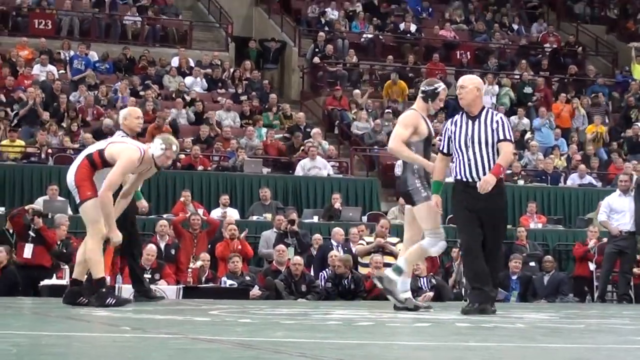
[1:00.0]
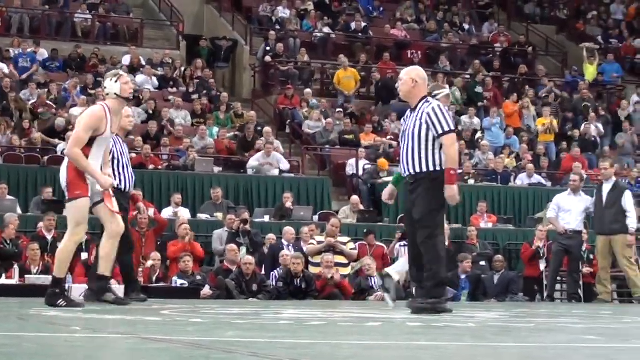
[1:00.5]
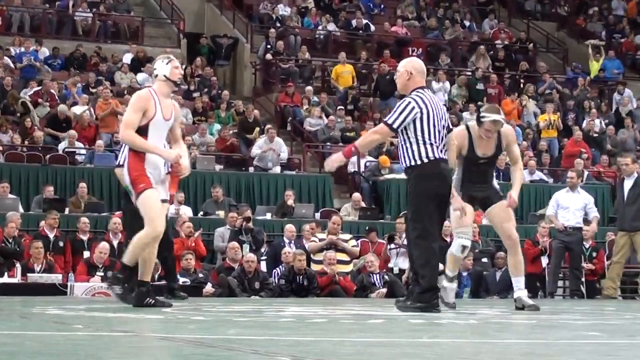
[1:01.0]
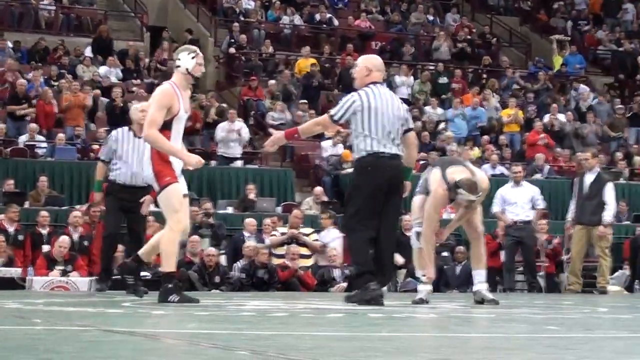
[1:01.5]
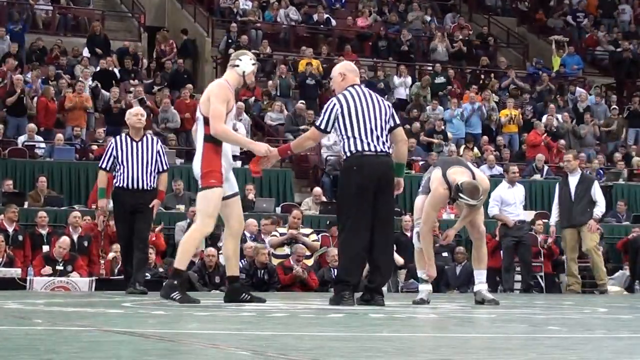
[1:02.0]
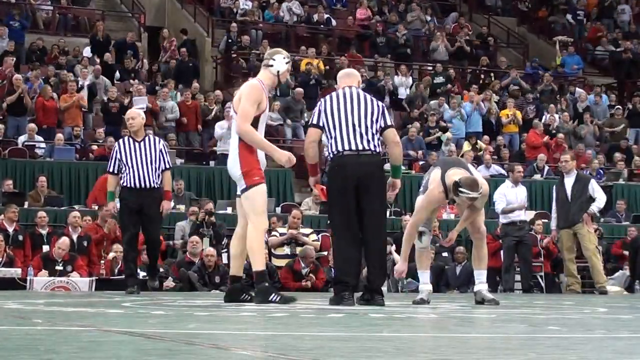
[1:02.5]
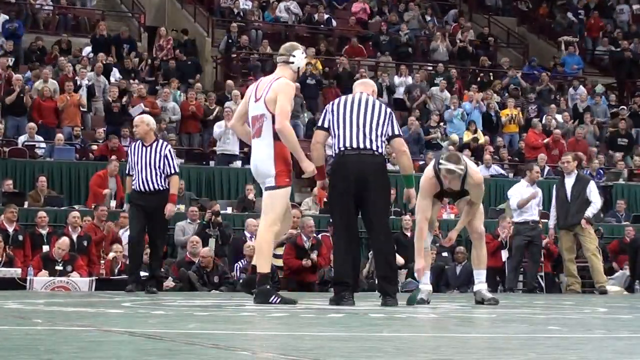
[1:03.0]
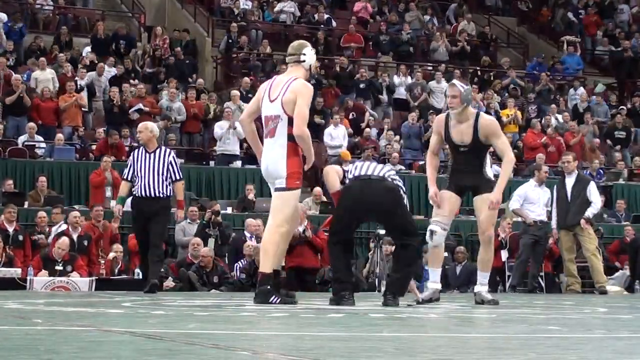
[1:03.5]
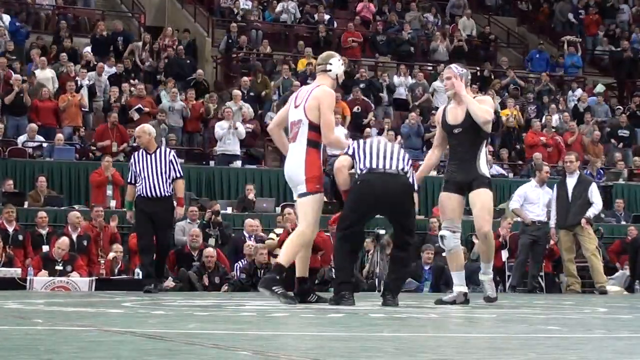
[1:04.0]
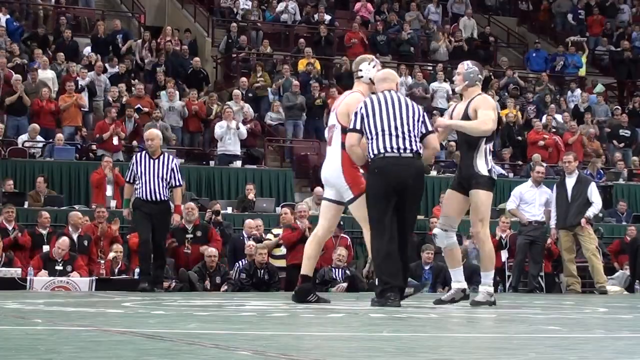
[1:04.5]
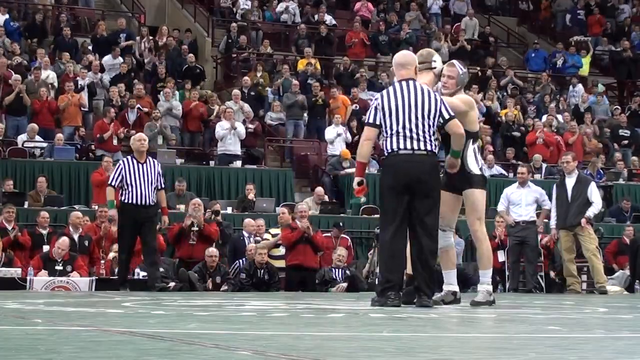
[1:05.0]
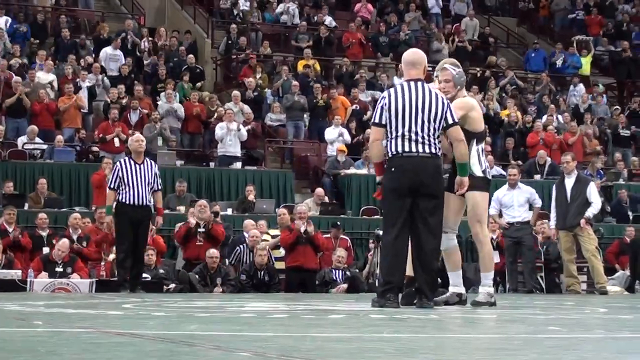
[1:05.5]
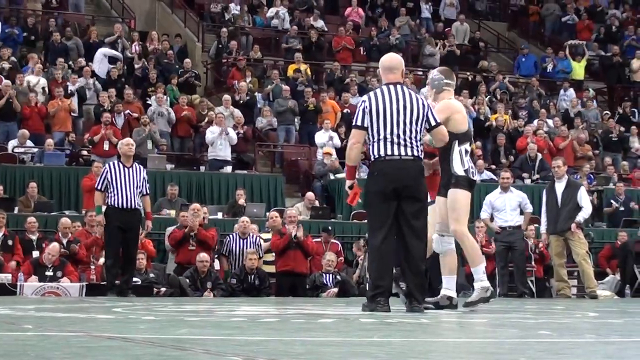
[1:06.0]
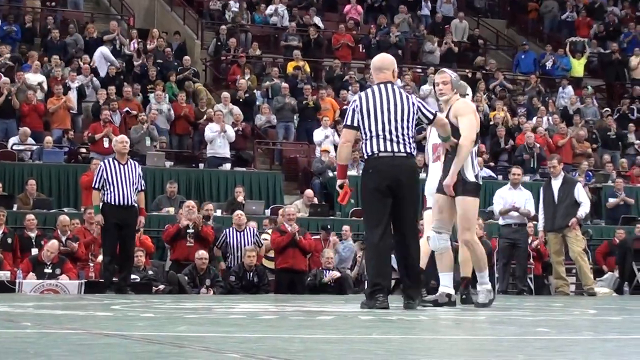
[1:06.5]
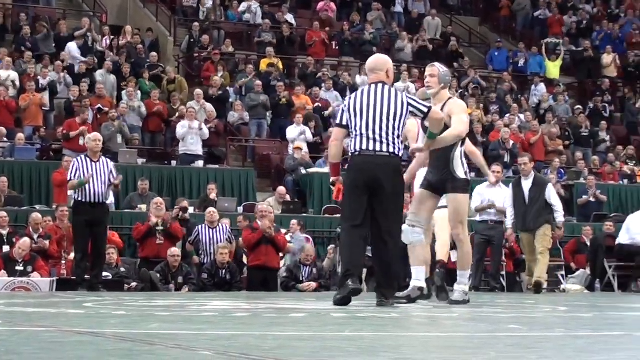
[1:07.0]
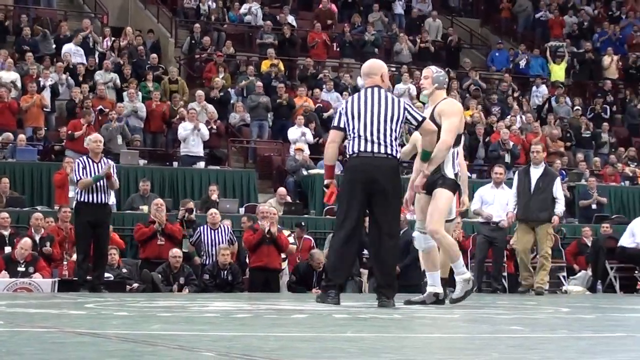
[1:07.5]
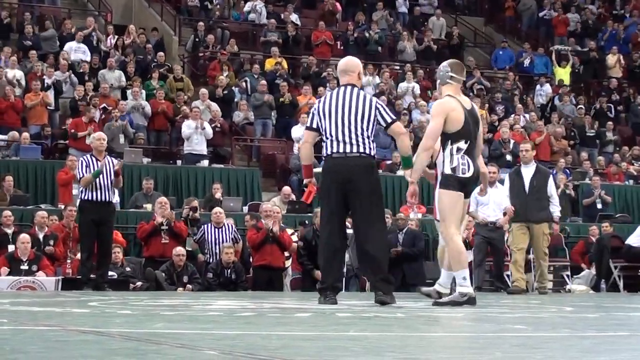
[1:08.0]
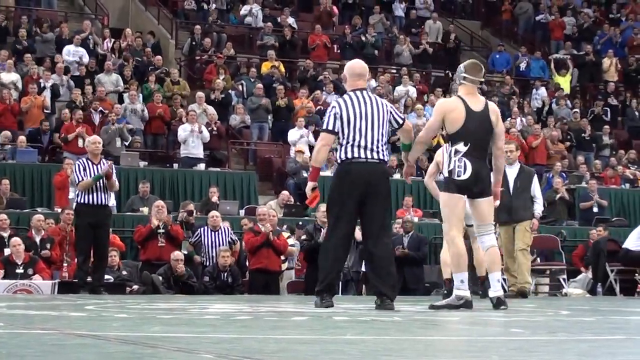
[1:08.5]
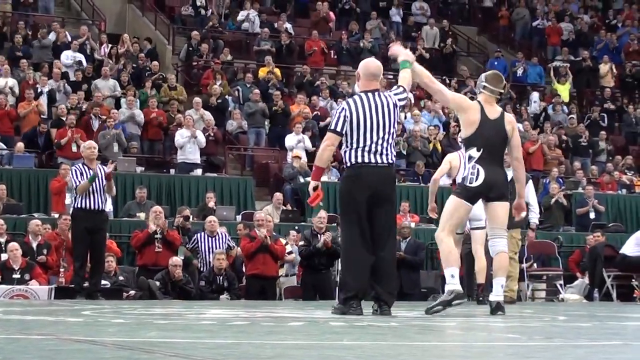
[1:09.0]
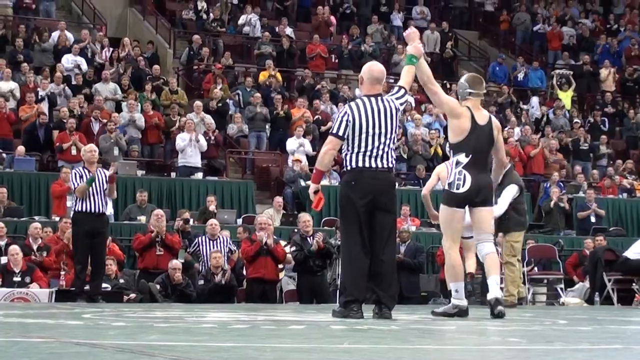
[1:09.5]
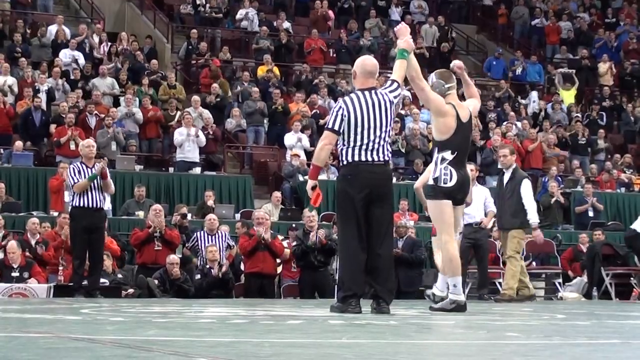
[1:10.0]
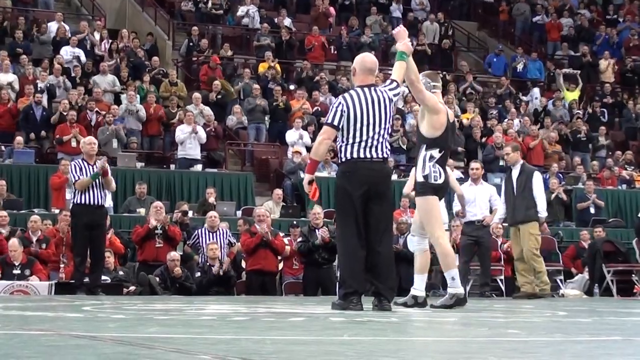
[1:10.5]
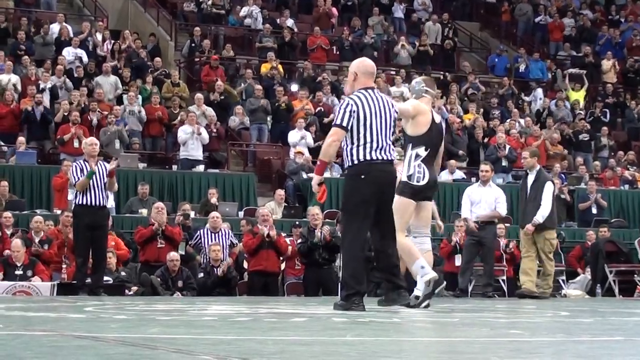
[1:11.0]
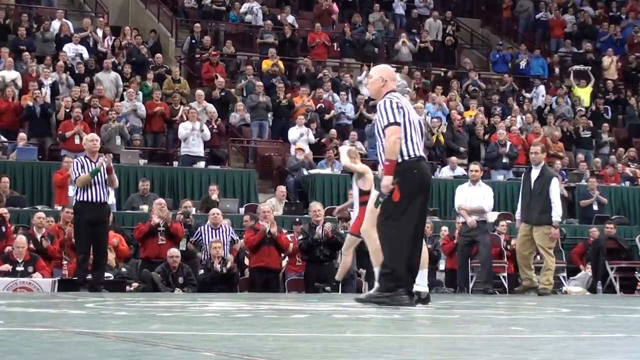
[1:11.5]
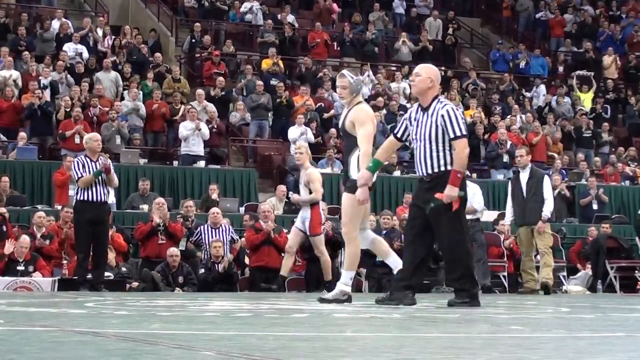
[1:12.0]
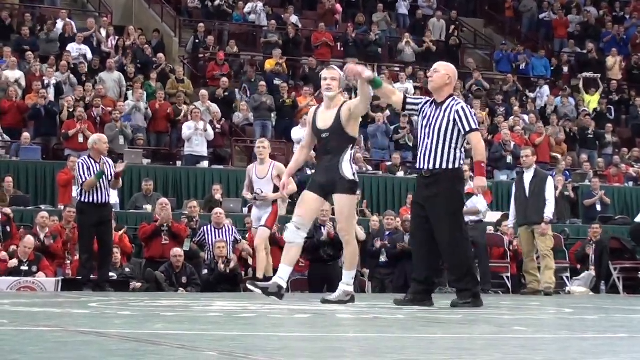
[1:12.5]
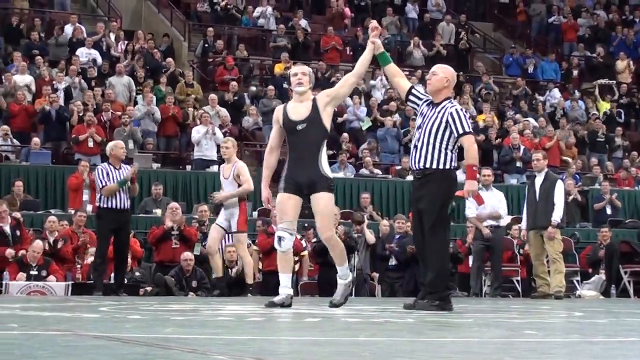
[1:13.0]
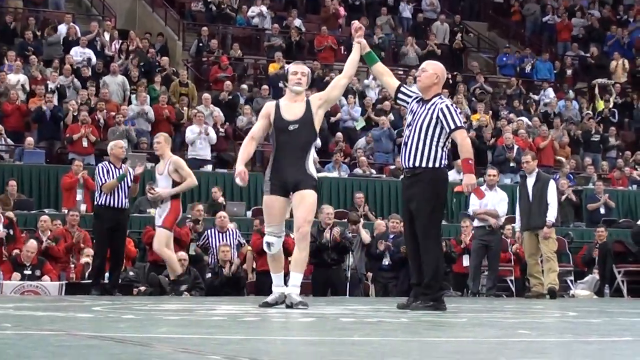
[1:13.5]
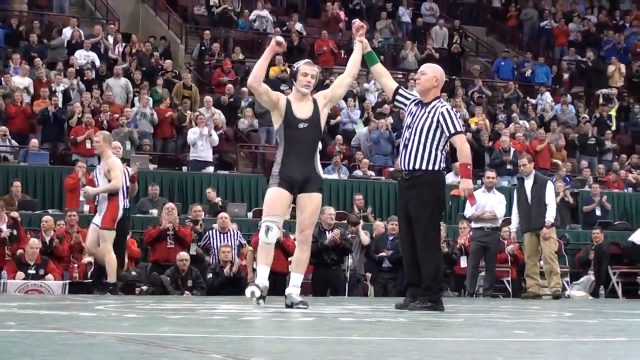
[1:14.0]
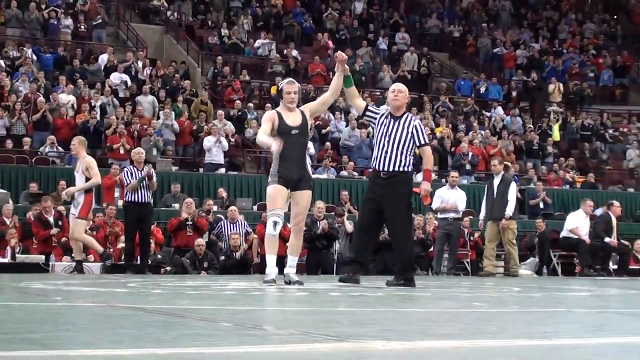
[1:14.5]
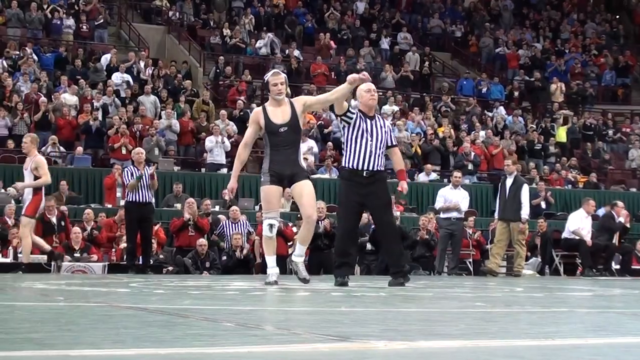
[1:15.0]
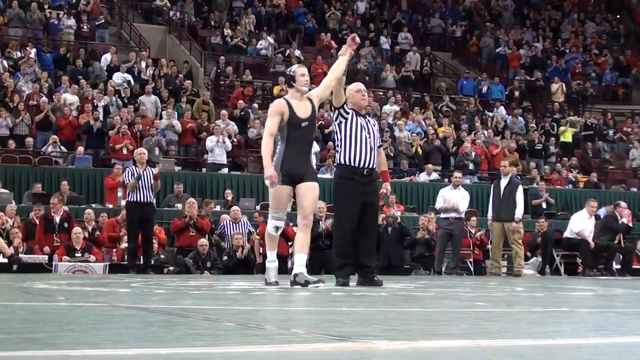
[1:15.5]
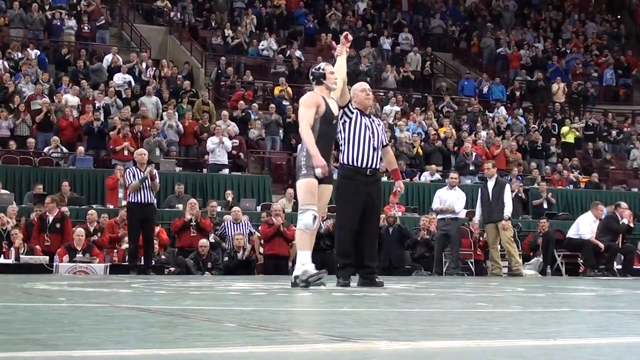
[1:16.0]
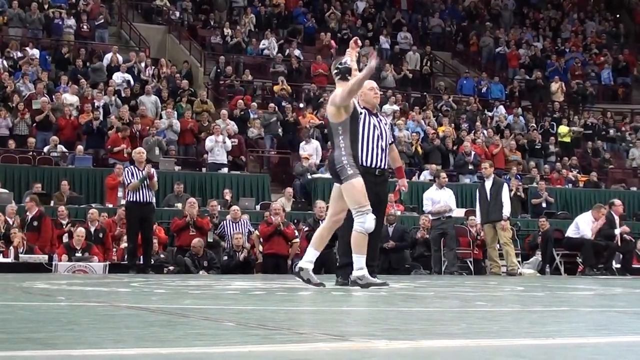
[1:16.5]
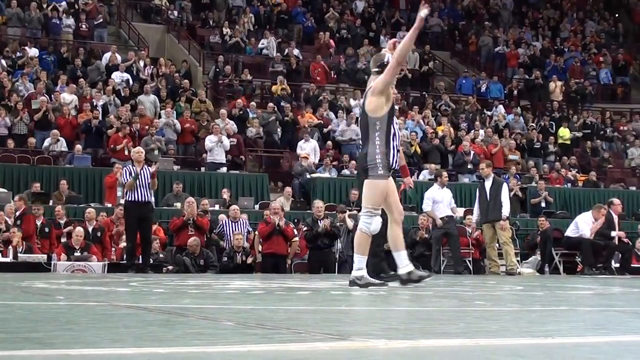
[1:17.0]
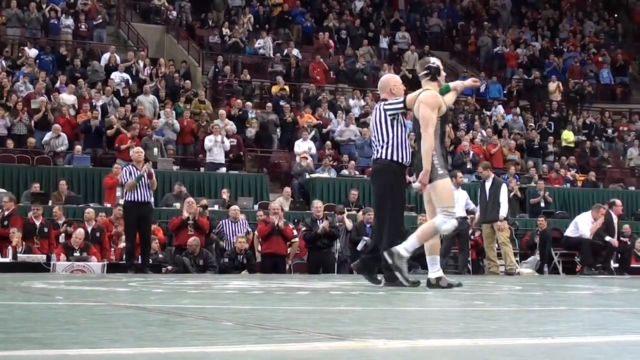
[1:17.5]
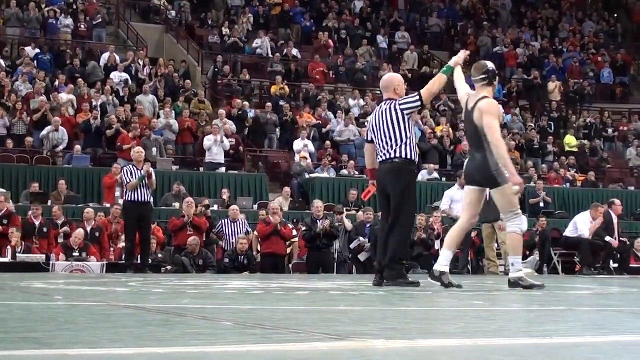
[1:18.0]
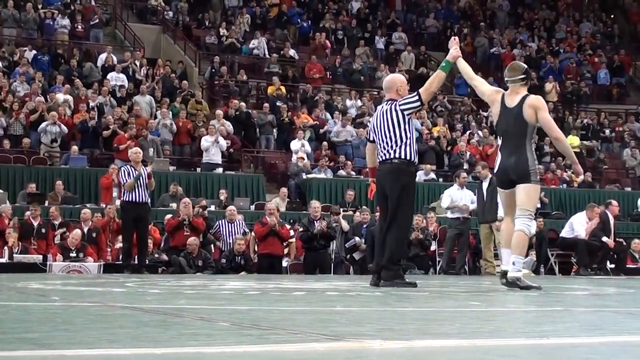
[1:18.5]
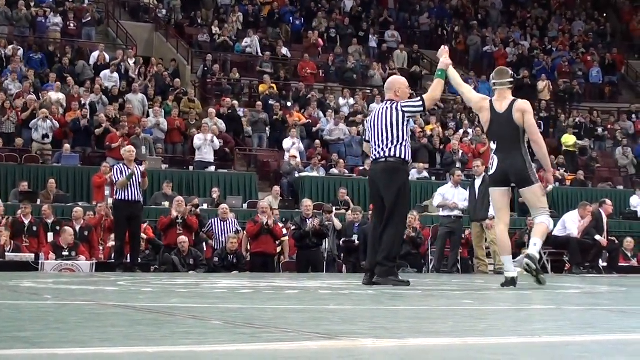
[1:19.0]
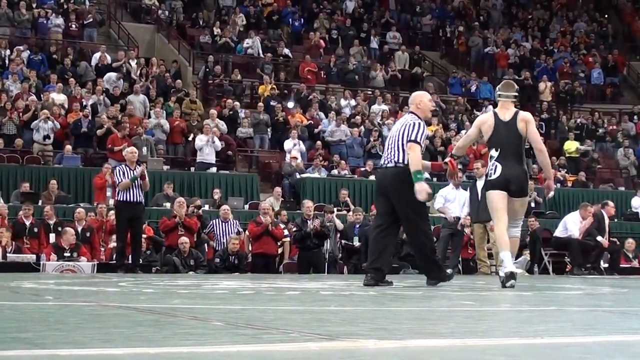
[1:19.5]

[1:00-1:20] The two wrestlers, both clearly exhausted, step toward each other and shake hands firmly. The wrestler in white walks off calmly, removing his ankle strap, and the wrestler in black removes his ankle strap as well. The referee steps in, takes the left wrist of the wrestler in black and raises it high, and the crowd erupts in applause. Fans stand, clapping steadily, as the winner nods and does a slow 360 turn with the referee signaling victory. His face is composed. The referee gives him a solid pat on the back numerous times before releasing his hand.